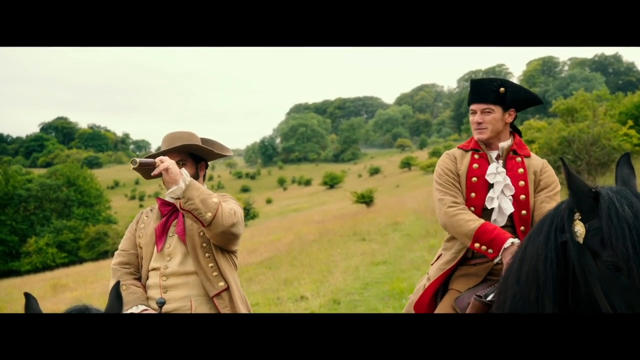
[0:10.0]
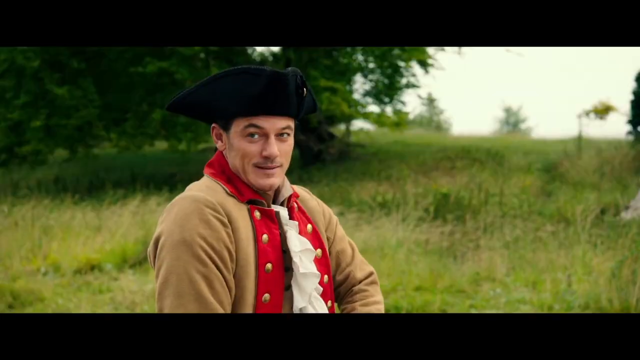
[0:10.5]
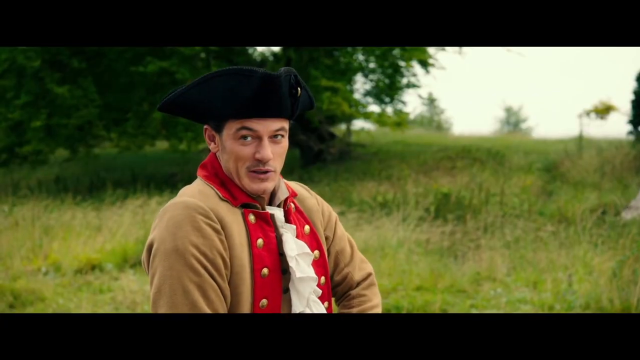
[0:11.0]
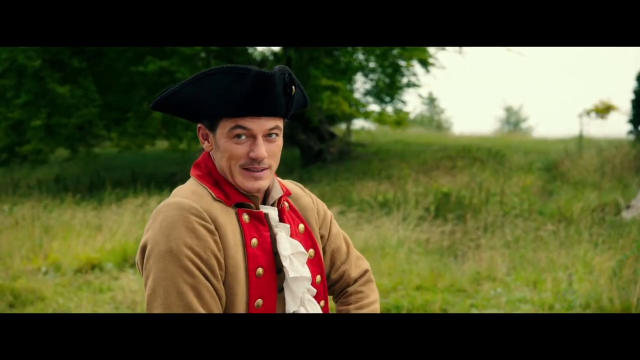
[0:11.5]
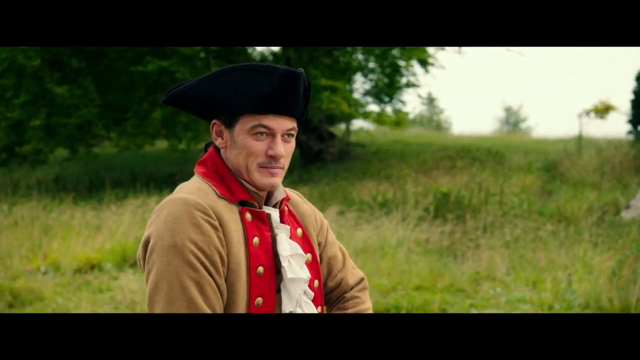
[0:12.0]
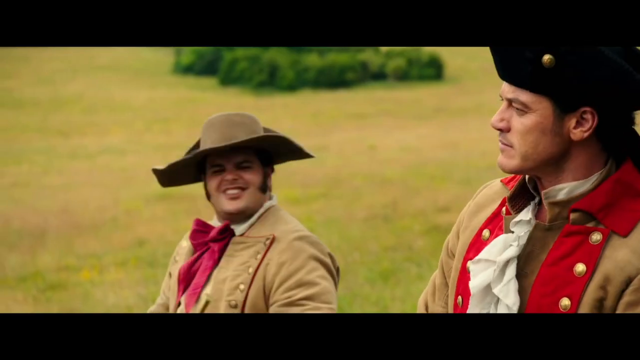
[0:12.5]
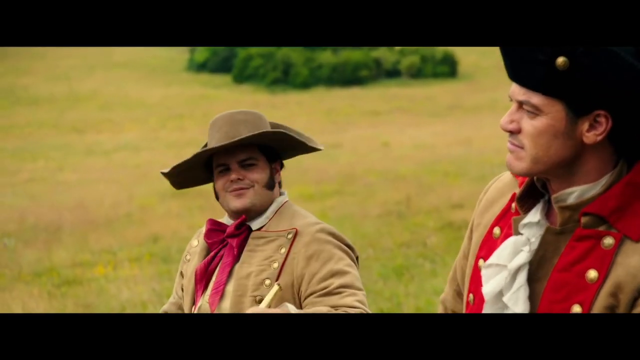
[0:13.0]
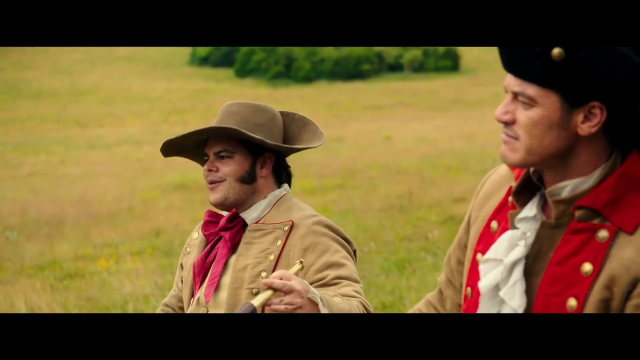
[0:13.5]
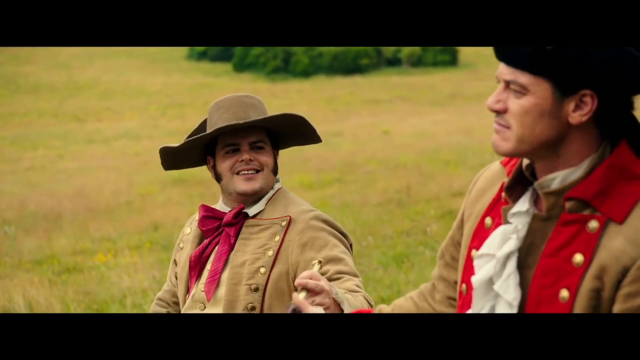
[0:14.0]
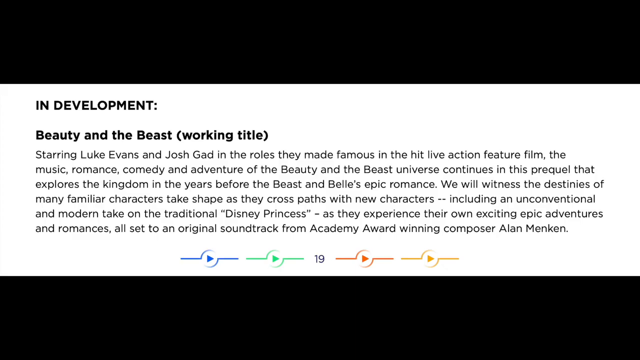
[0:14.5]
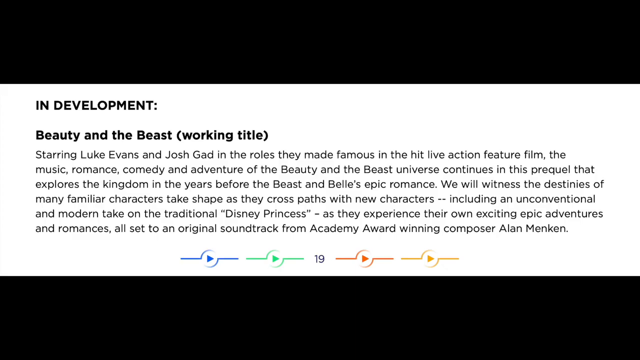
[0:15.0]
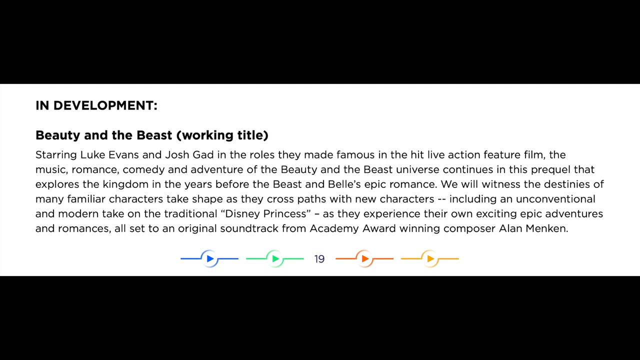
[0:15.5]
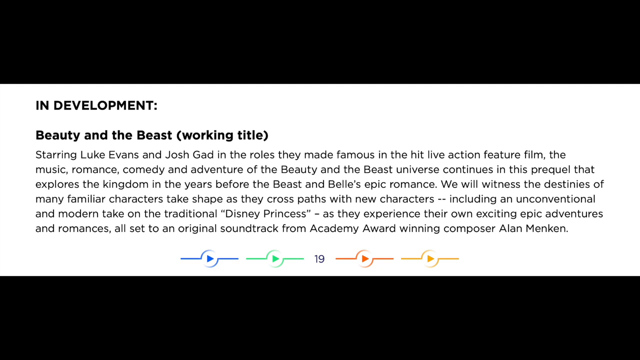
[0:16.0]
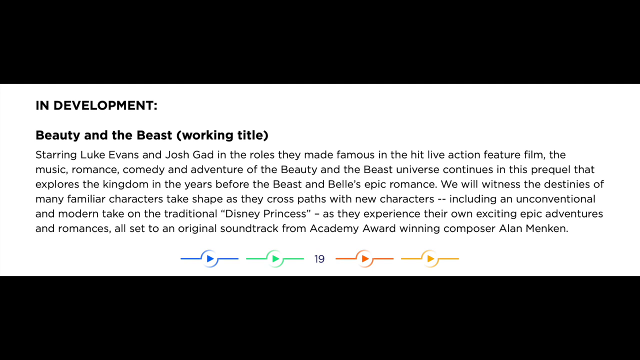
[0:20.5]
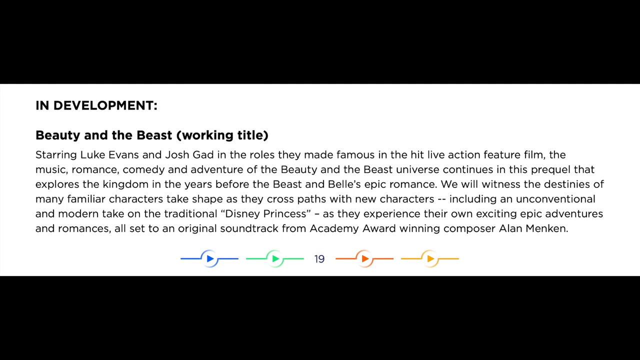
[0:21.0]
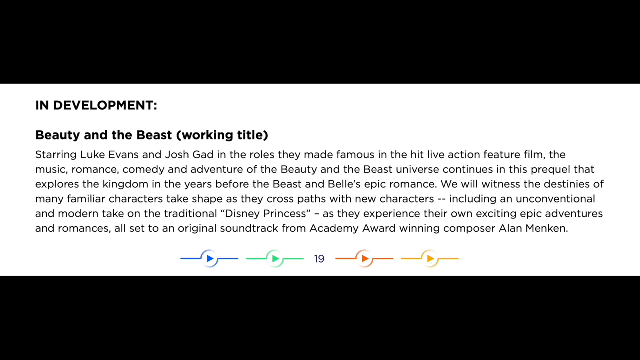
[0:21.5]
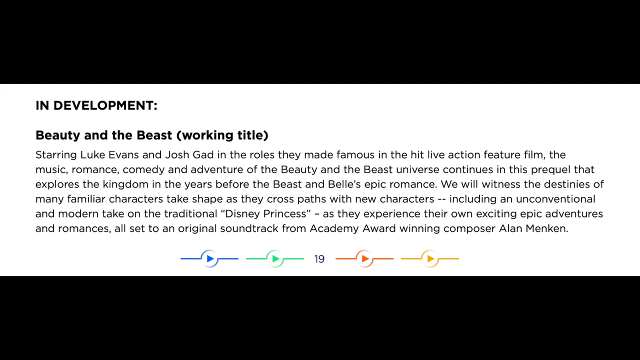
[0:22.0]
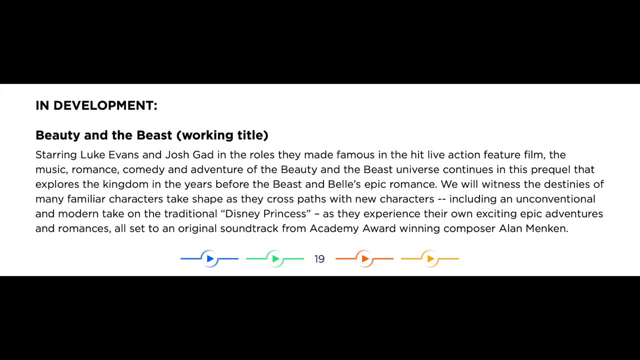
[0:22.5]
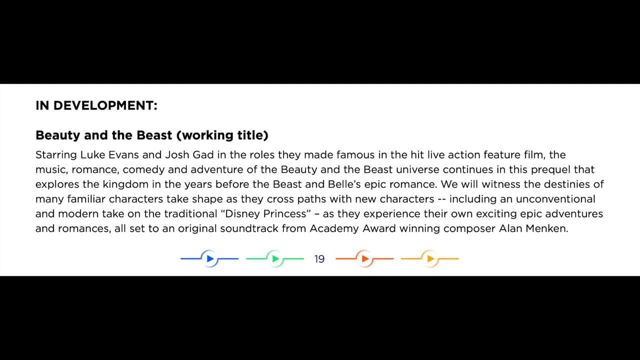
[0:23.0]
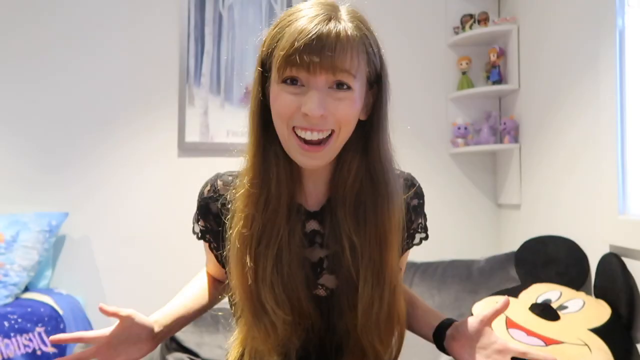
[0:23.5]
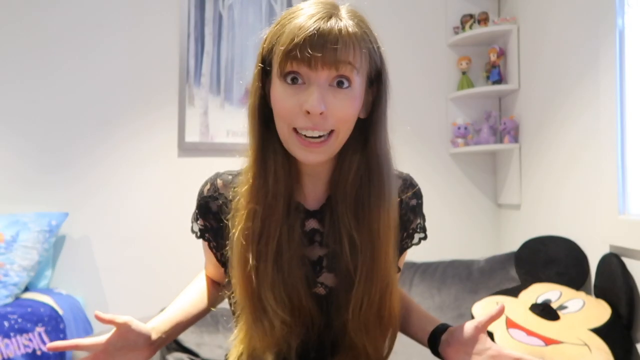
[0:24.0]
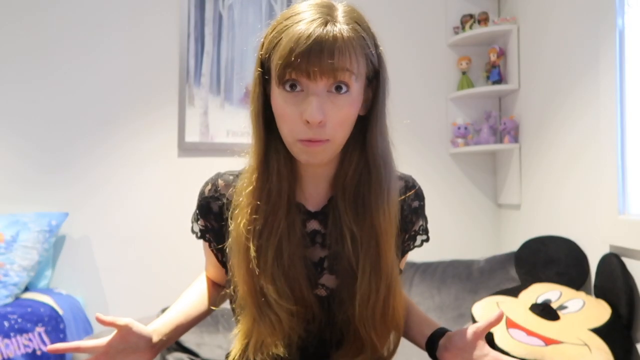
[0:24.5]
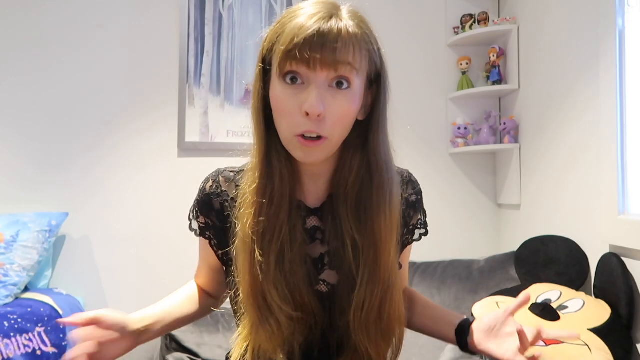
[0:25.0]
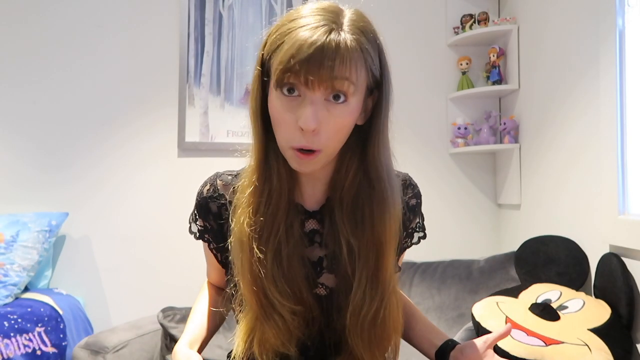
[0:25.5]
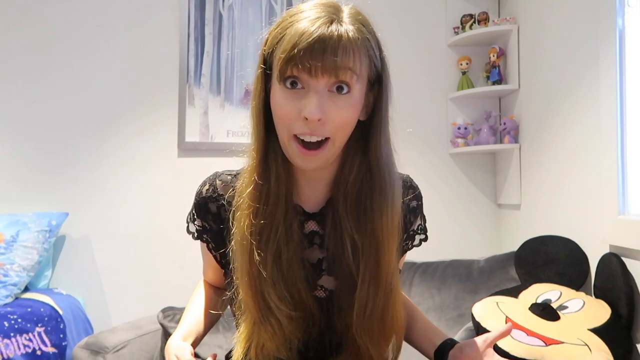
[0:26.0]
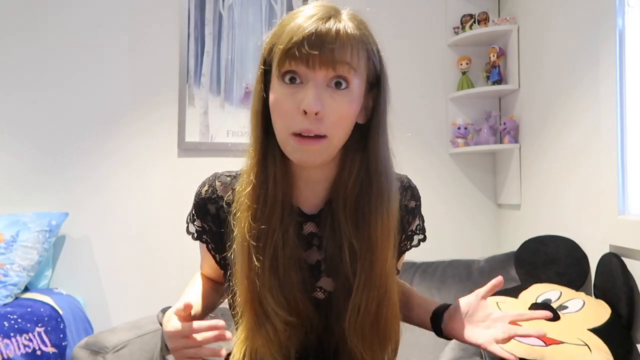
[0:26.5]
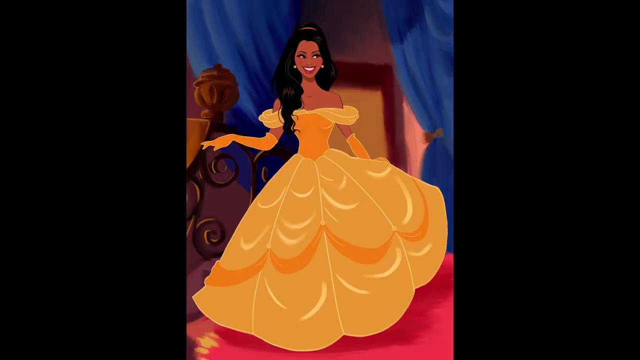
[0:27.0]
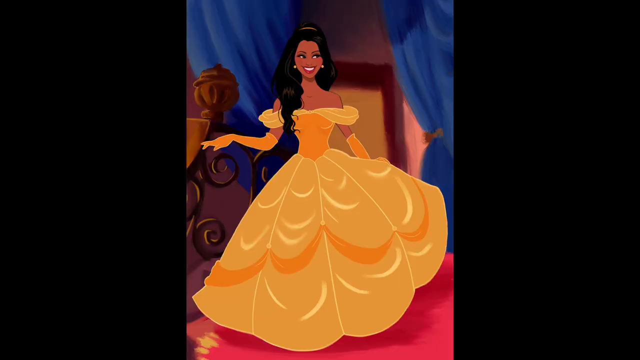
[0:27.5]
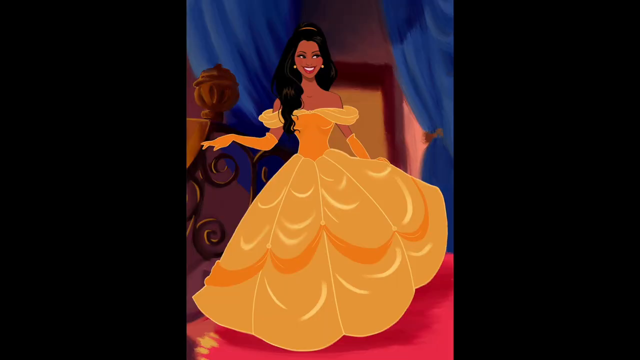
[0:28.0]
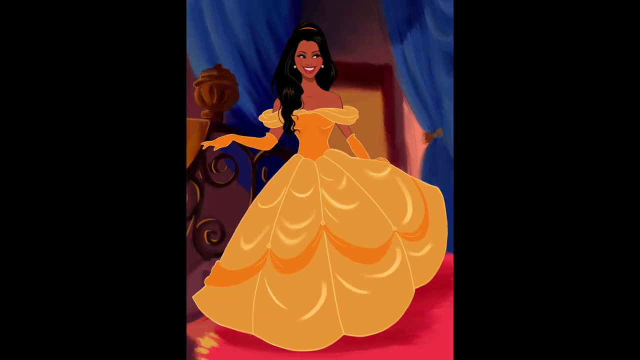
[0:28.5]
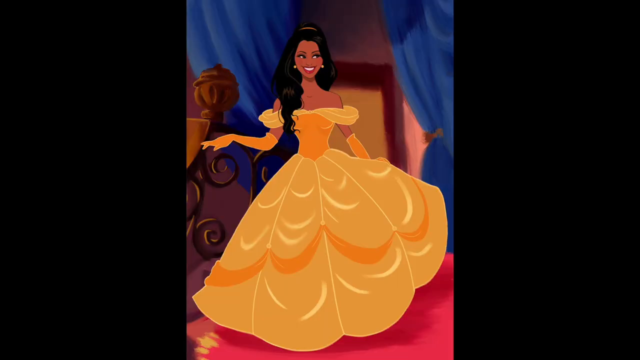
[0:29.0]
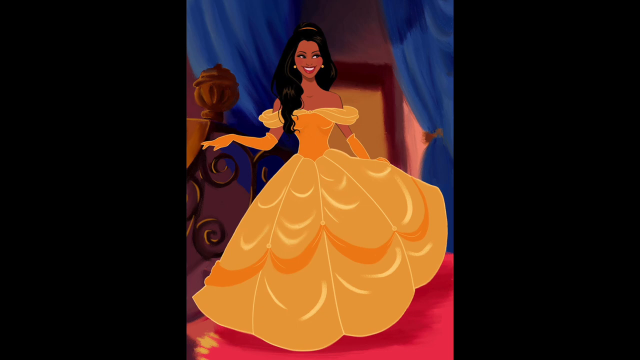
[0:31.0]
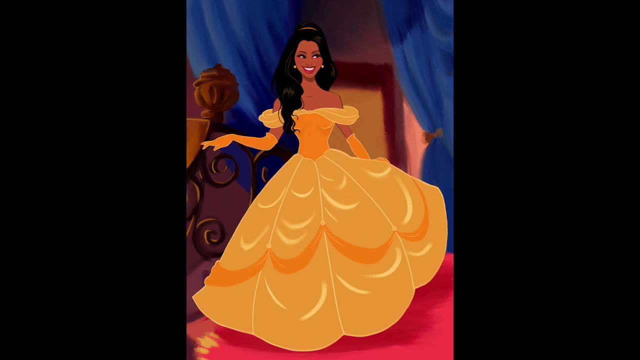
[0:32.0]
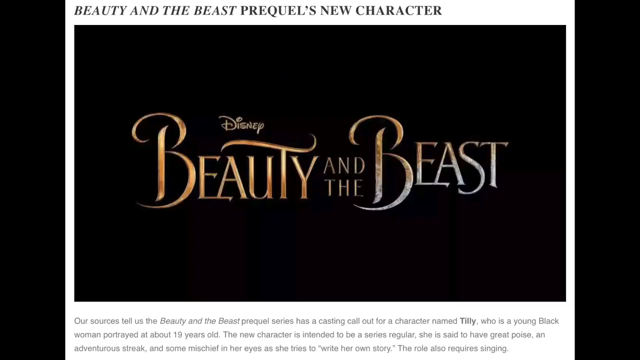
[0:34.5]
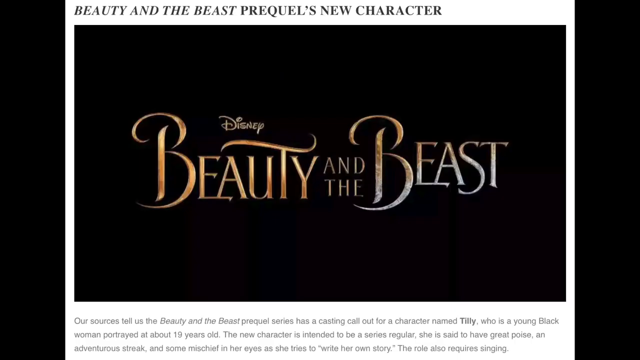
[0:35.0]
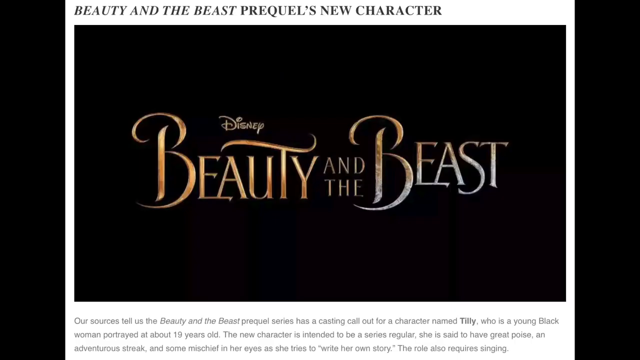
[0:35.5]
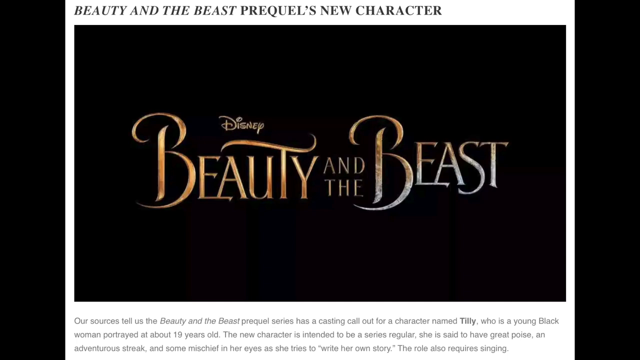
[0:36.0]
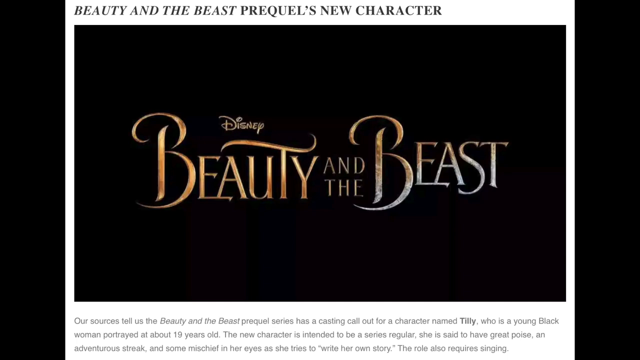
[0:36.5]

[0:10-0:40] The two men, apparently pirates, appear along with on-screen text reading "In development, Beauty and the Beast, working title, starring Luke Evans and Josh Gard in the roles they made famous in the hit live action feature film. The music, romance, comedy and adventure of the Beauty and the Beast universe continues in this prequel that explores the kingdom in the years before the Beast and Belle's epic romance." The text goes on to mention new characters, including "an unconventional and modern take on the traditional Disney princess," all set to an original soundtrack from "Academy Award-winning composer Alan MacMahon." A lady with sparkling eyes appears, then a Disney princess in a beautiful dress, and the words "Beauty and the Beast." The two pirates are in a forest with trees, looking through their binoculars while on top of unidentified animals resembling donkeys. A collection of dolls is shown. The Disney princess, in a gown, smiles. A tattoo reads "Beauty and the Princess." The men look through their binoculars and then start talking.